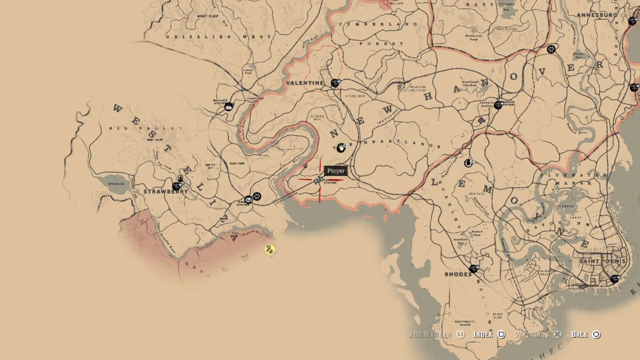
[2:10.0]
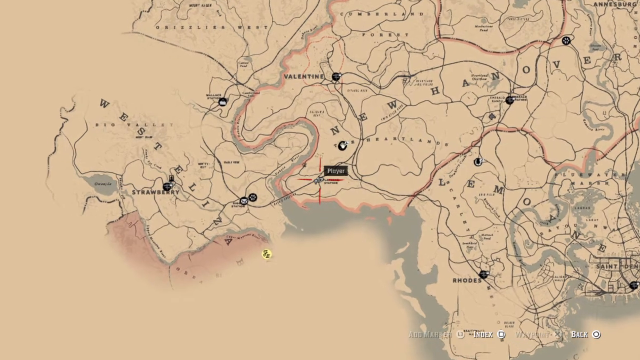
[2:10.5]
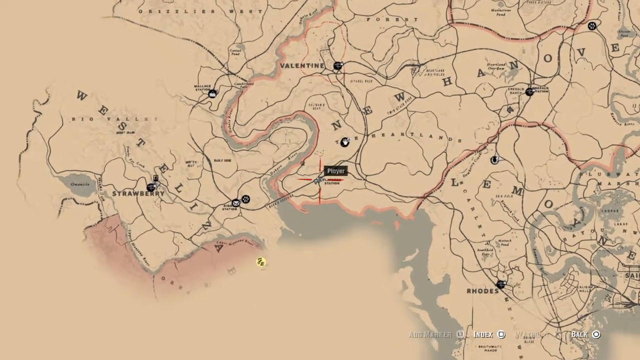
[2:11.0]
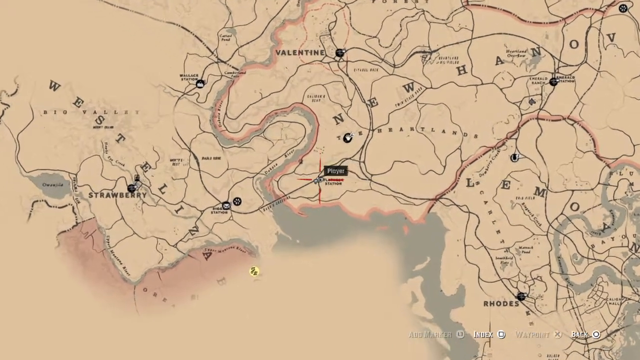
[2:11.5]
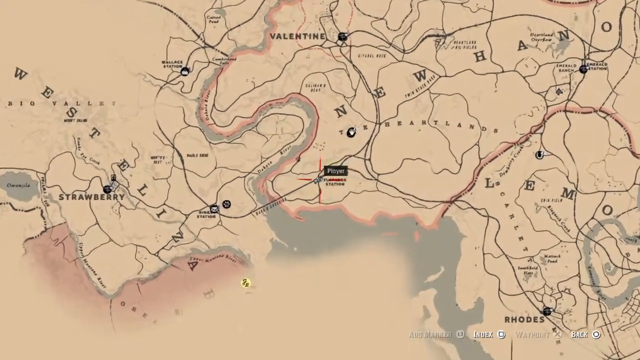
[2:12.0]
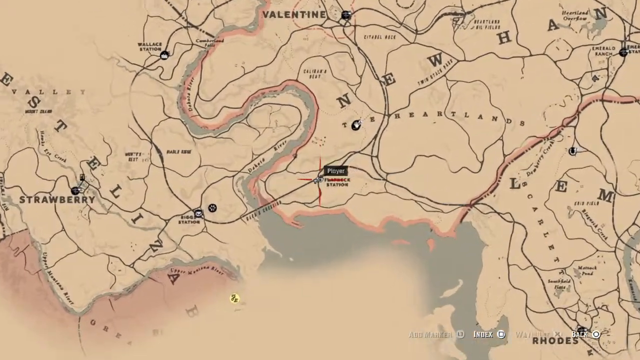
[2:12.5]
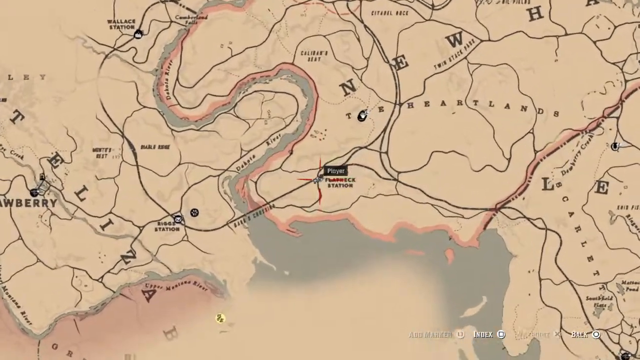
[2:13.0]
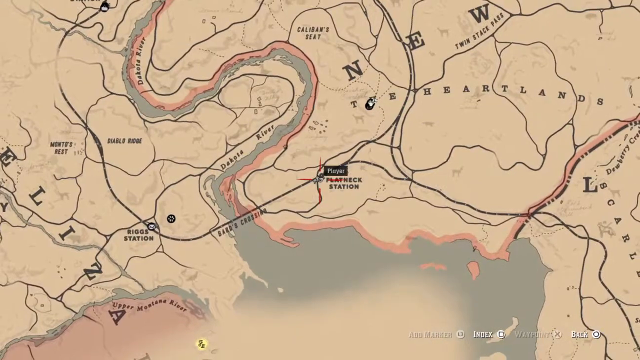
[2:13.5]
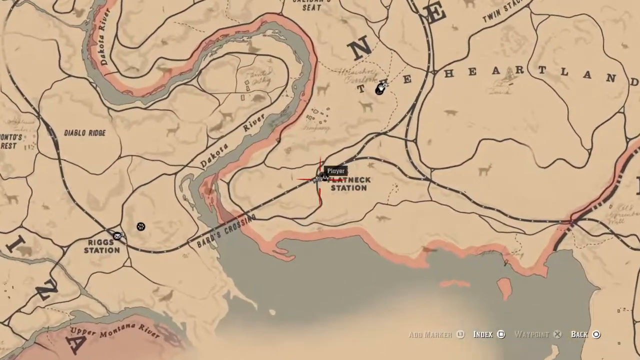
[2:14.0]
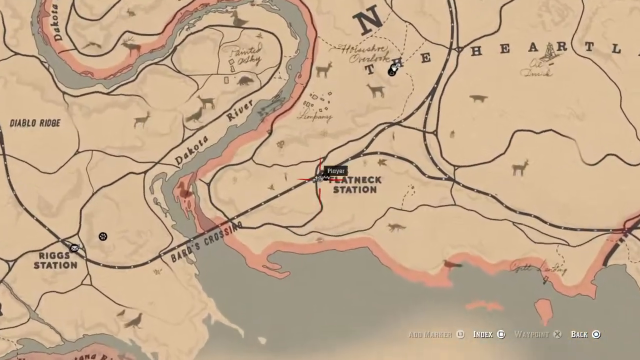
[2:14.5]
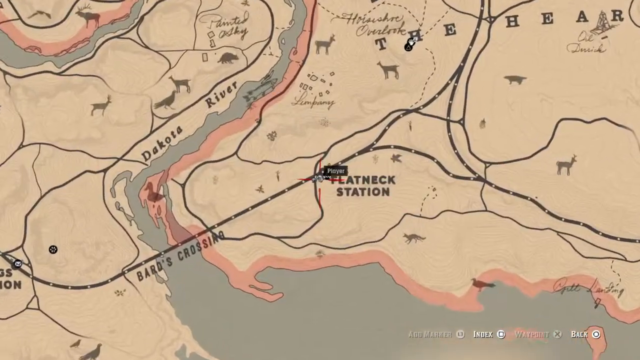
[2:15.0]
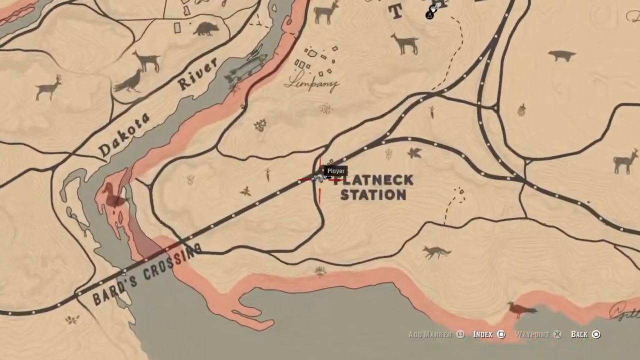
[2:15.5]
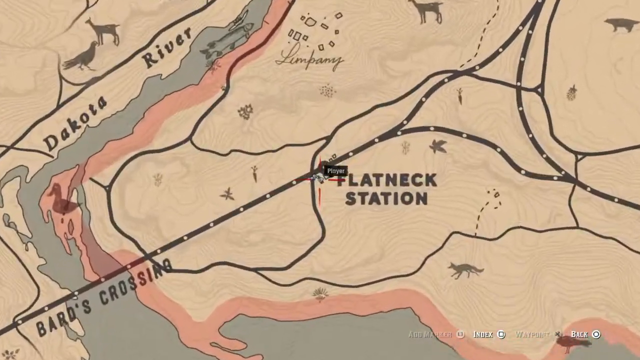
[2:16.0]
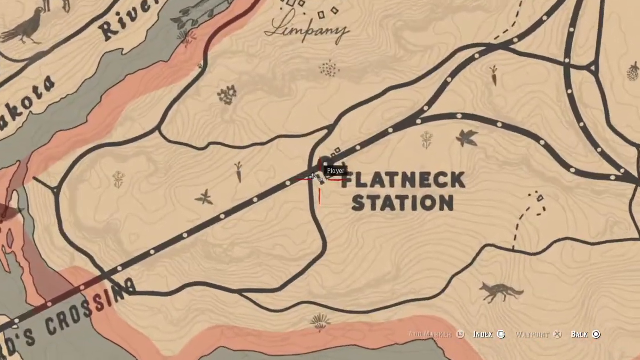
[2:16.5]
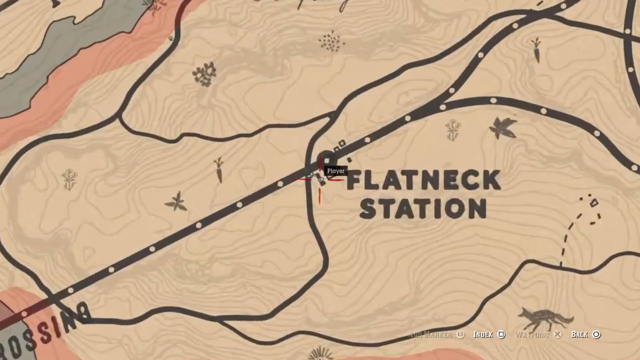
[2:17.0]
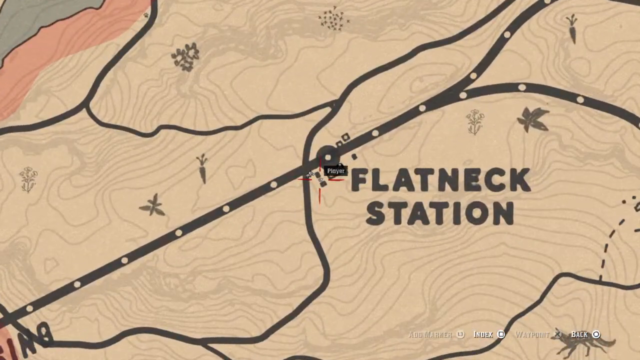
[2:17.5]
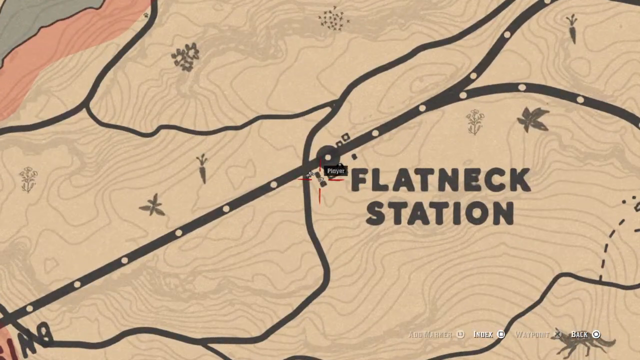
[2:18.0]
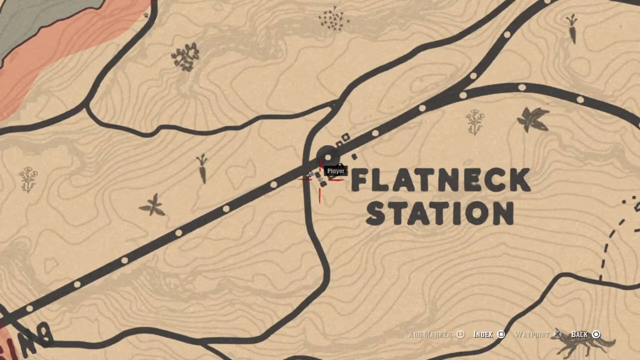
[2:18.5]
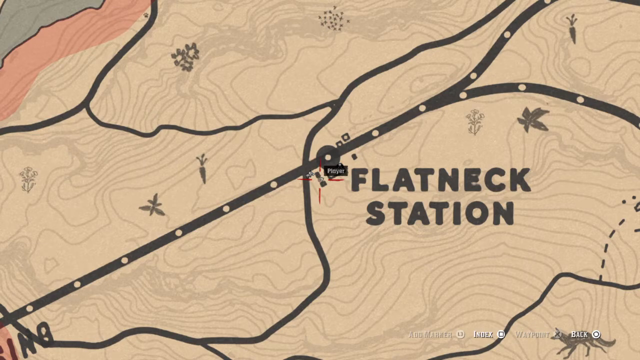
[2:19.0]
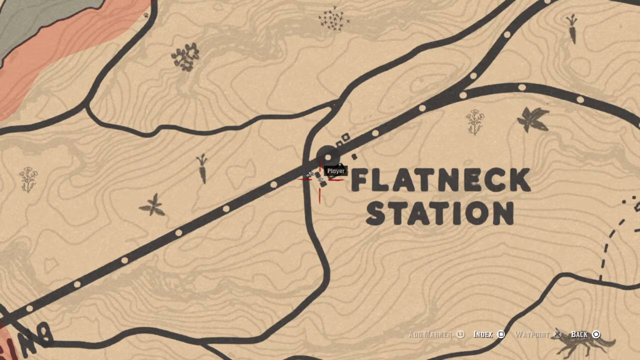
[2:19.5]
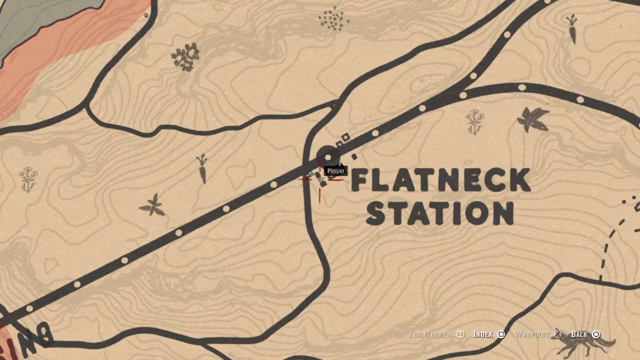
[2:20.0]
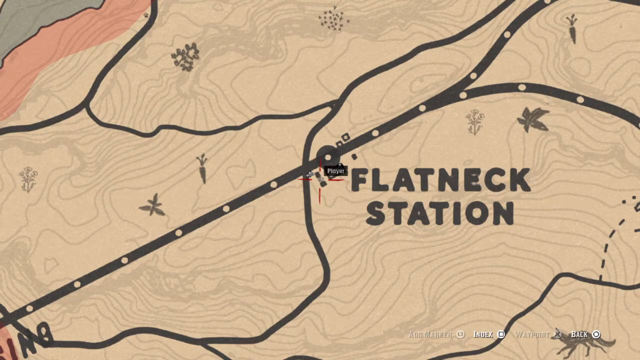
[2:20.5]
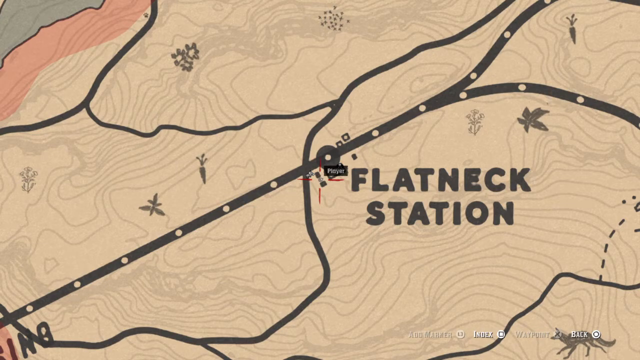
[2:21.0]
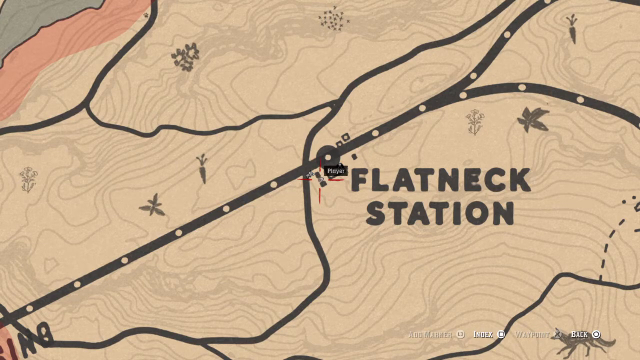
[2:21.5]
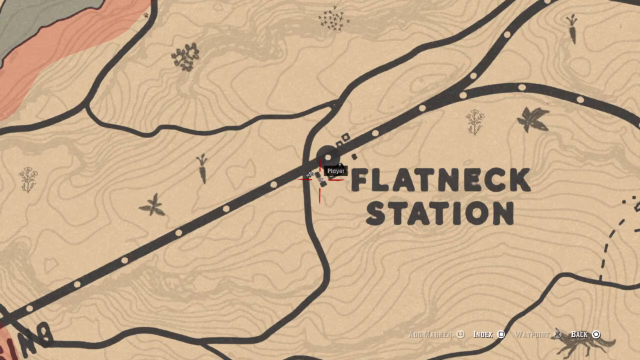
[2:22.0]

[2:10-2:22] The map zooms back in to where the player is, near Flatneck Station. Images of animals appear throughout the map, marking where they can be found, along with plants marking where native plants grow. Roads on the map are shown as black lines with tan circles along them. Close to the station is a river named the Dakota River, and a bridge named Bards Crossing goes across it. In the middle of the map is text that says "The Heartland."